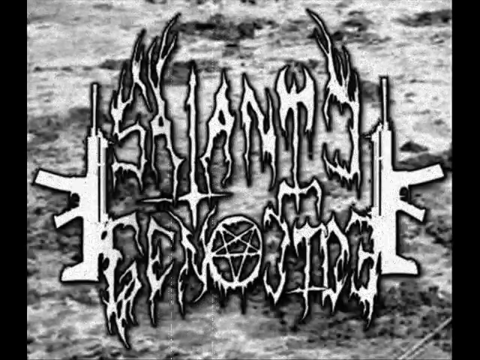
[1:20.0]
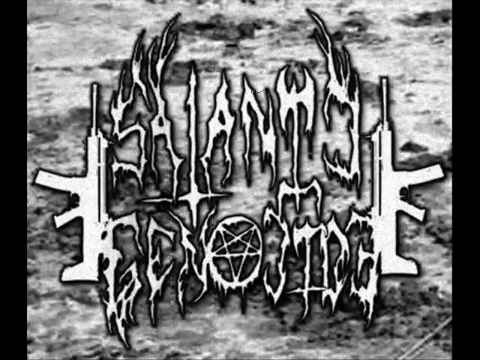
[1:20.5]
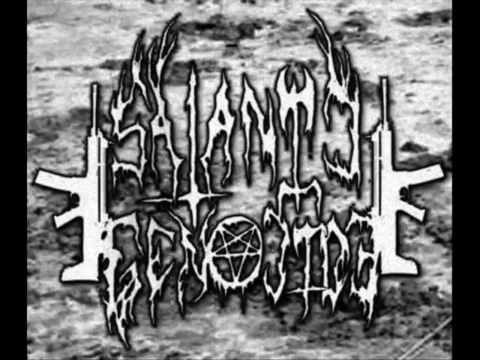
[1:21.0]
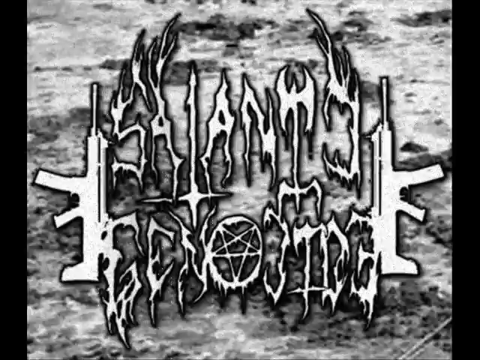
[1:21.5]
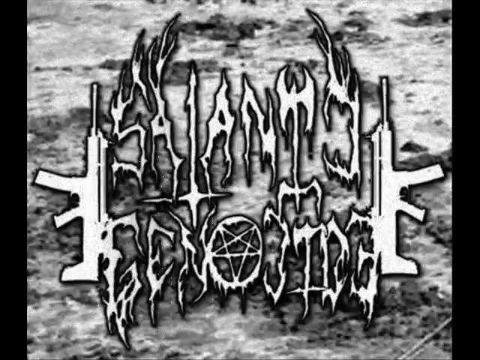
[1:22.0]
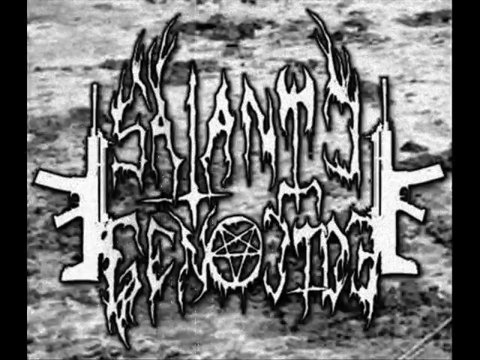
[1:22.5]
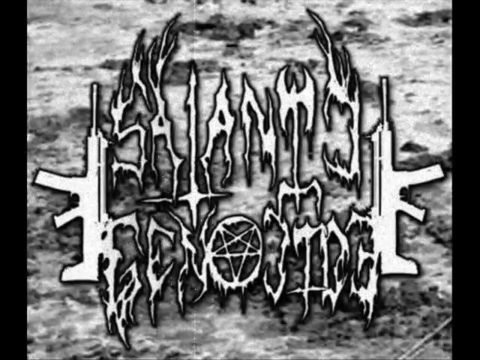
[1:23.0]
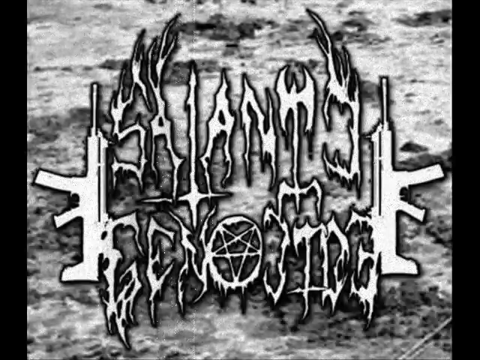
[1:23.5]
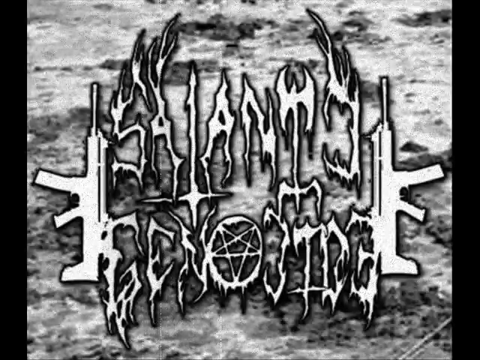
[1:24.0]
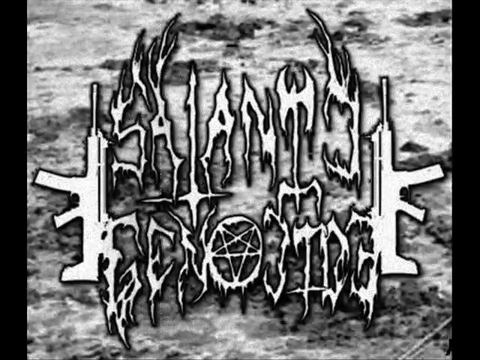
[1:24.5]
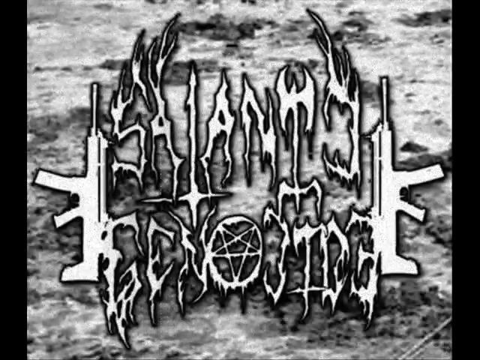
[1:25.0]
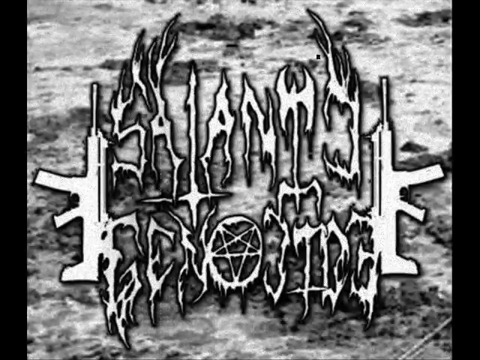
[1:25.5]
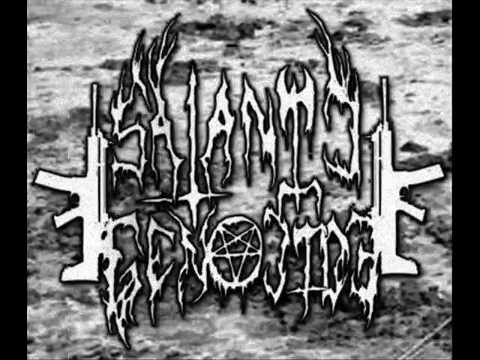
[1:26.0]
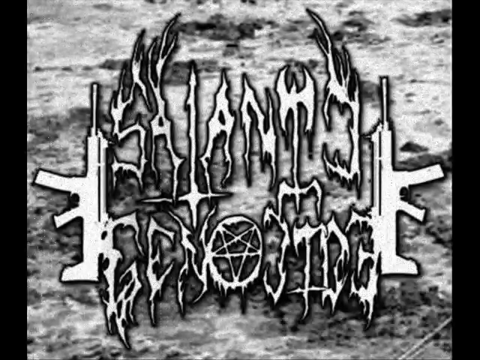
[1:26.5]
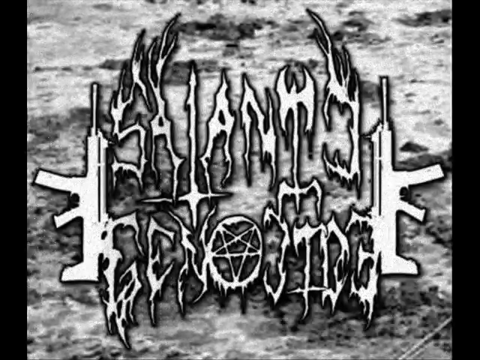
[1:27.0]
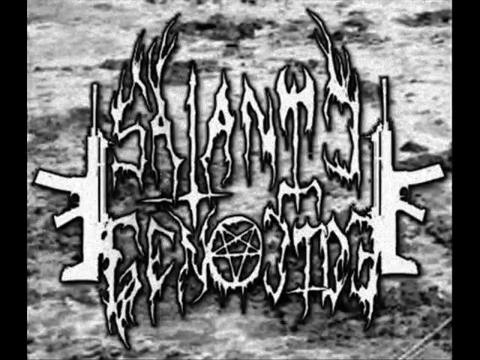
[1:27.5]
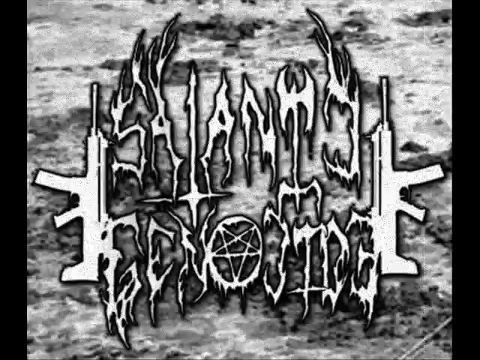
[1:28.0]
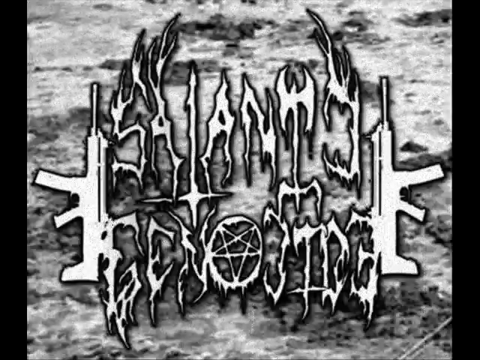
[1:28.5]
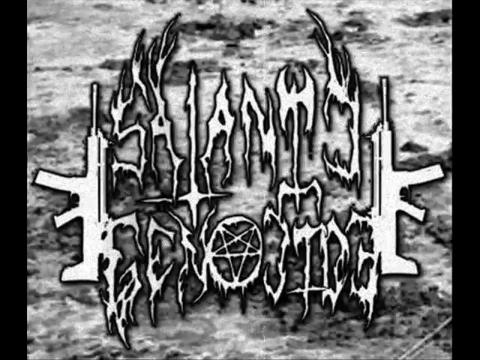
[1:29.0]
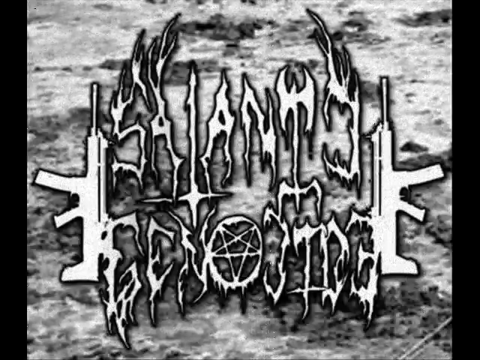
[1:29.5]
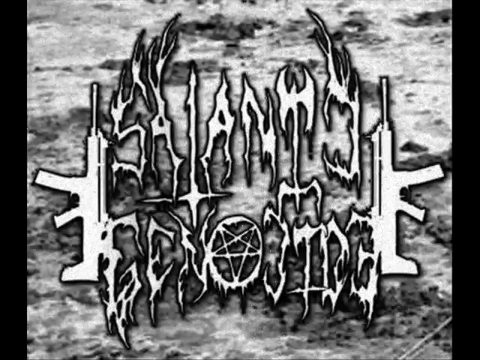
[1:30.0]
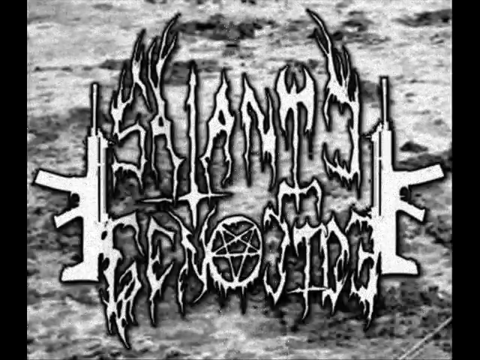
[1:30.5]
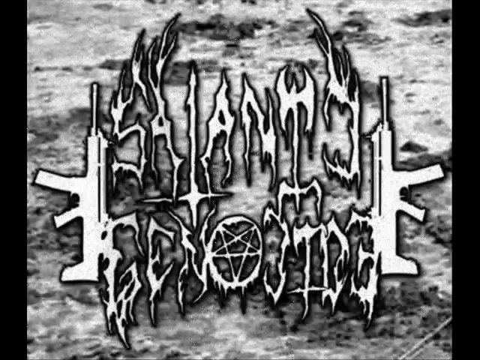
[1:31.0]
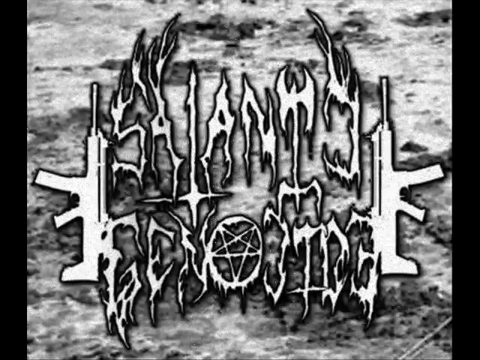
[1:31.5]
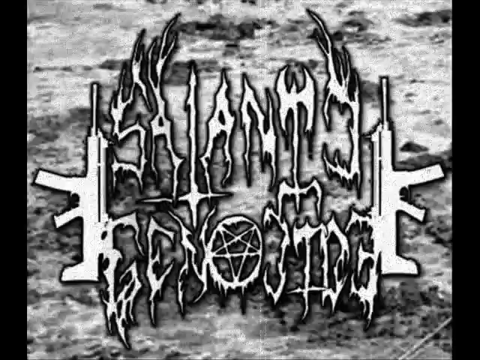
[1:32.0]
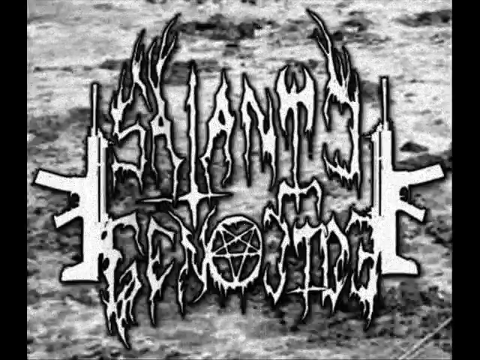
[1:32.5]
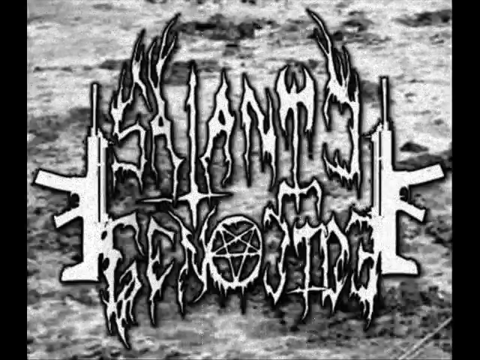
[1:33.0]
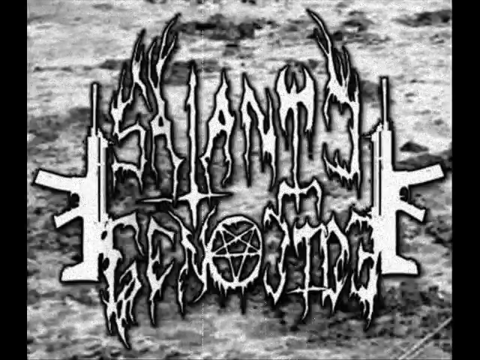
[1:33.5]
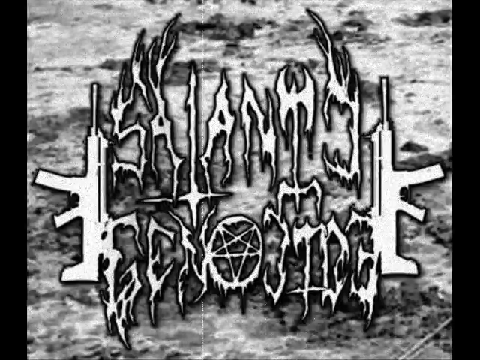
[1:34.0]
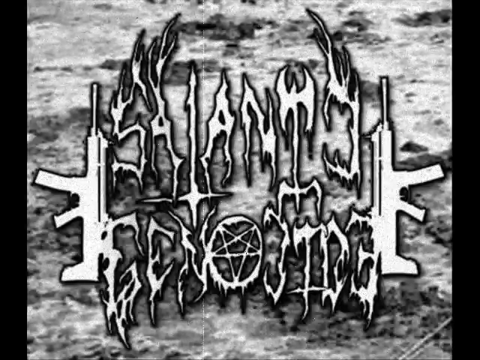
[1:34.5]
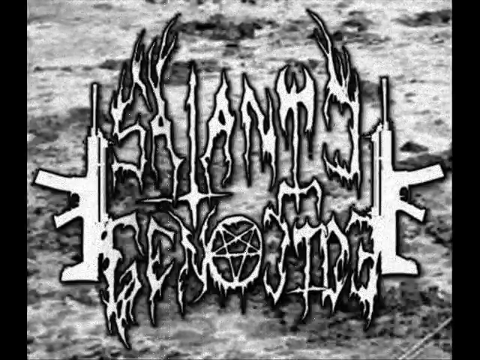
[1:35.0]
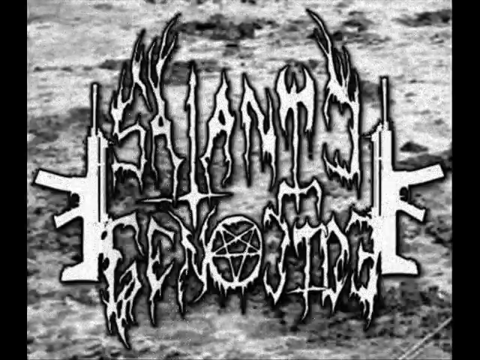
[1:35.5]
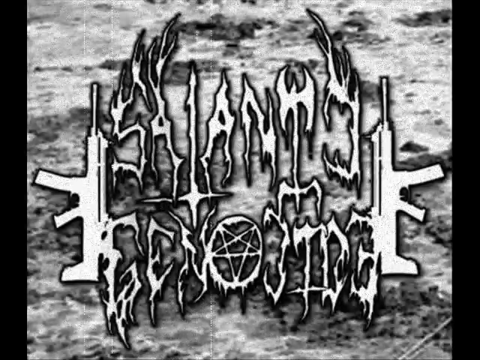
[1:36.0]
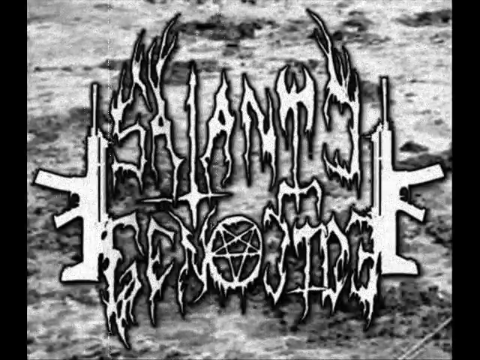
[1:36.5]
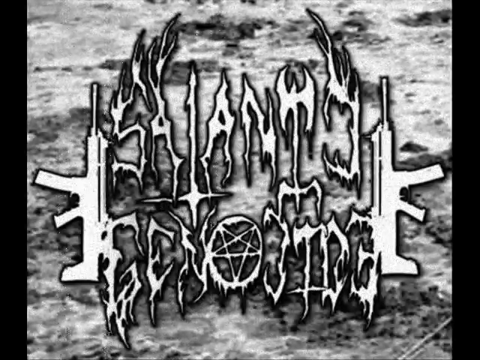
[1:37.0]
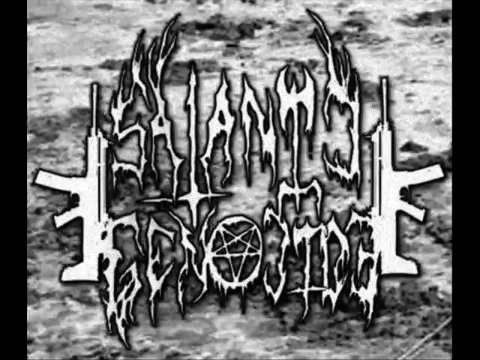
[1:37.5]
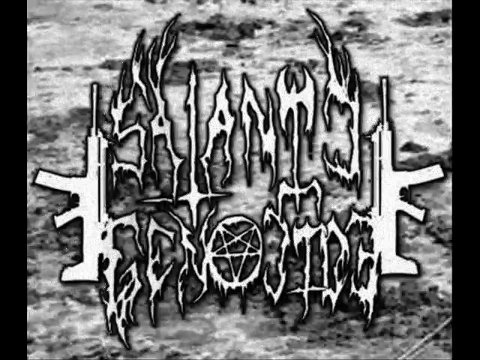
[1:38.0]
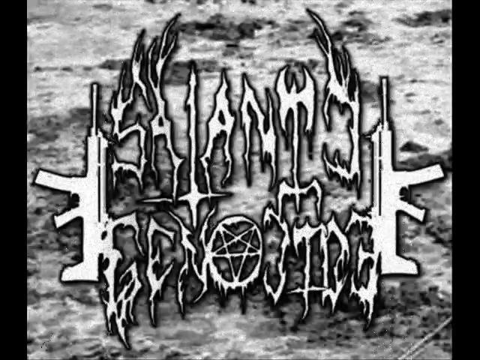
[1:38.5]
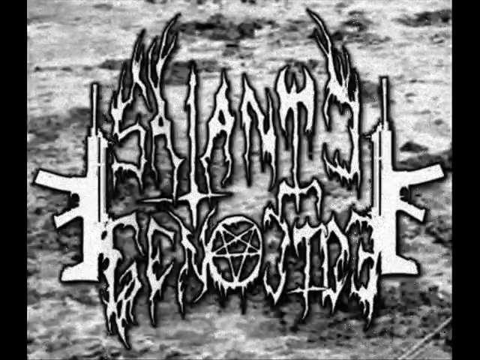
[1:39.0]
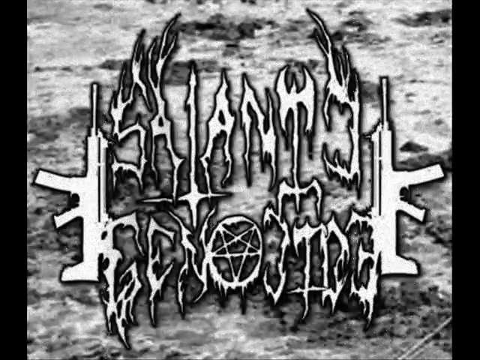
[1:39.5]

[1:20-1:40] The image stays the same, with the same background.